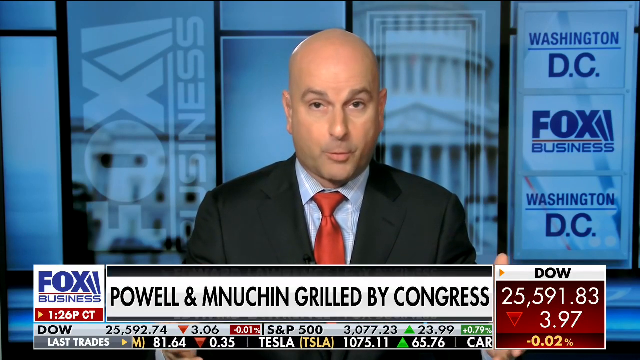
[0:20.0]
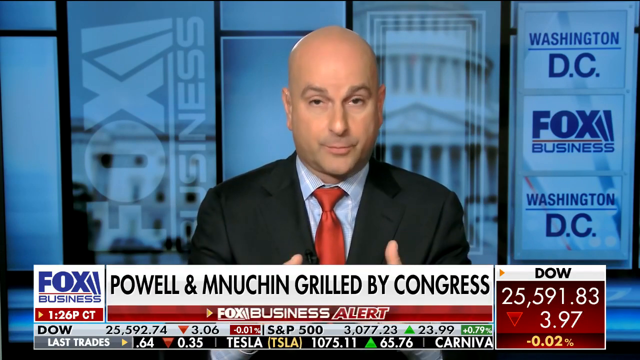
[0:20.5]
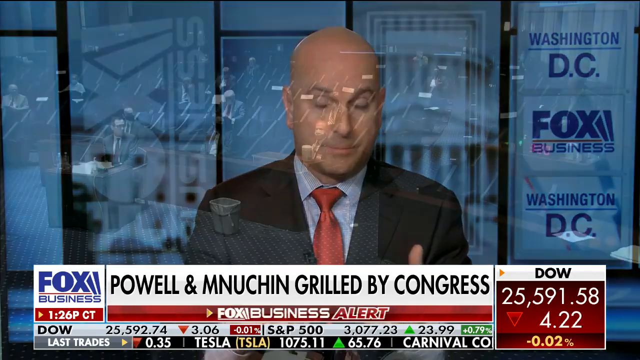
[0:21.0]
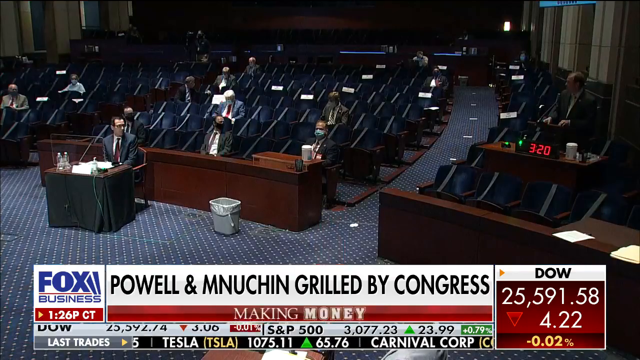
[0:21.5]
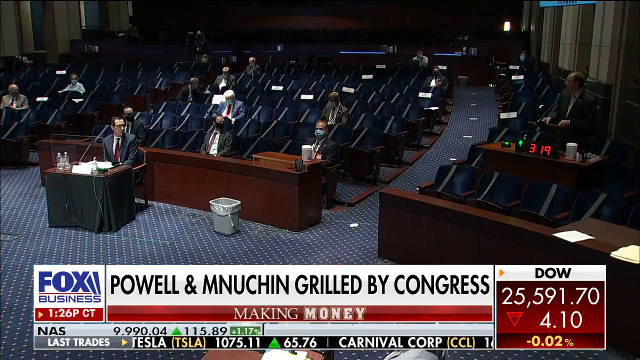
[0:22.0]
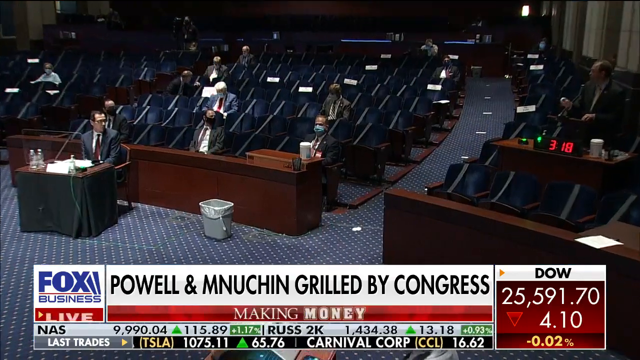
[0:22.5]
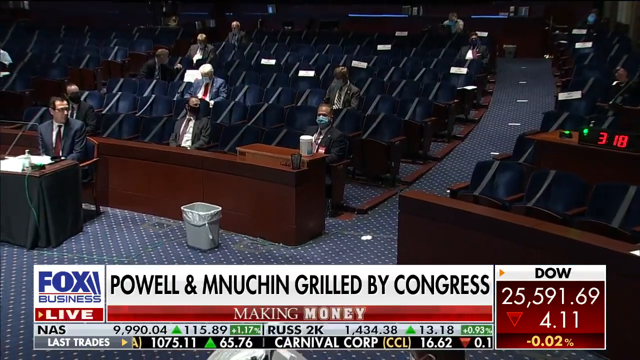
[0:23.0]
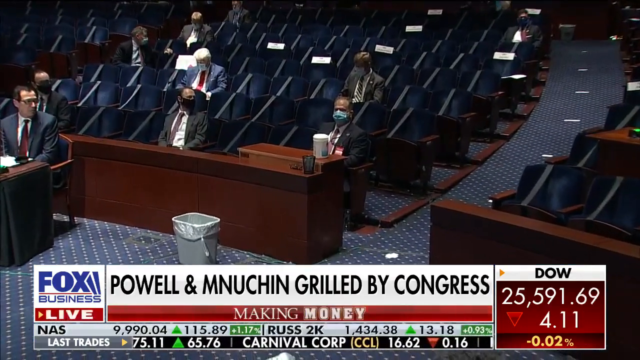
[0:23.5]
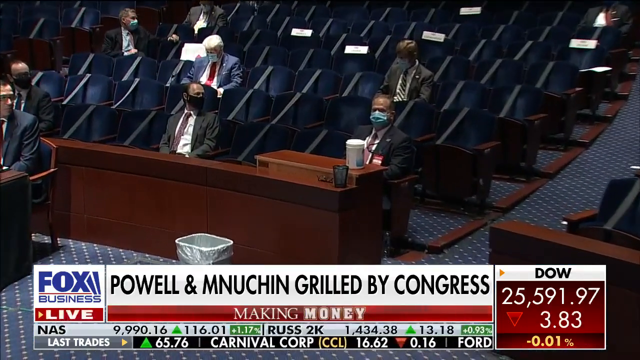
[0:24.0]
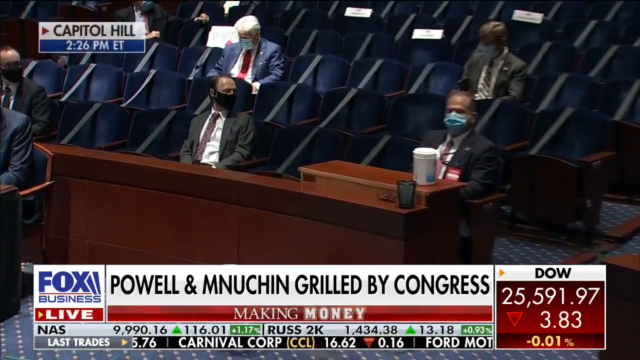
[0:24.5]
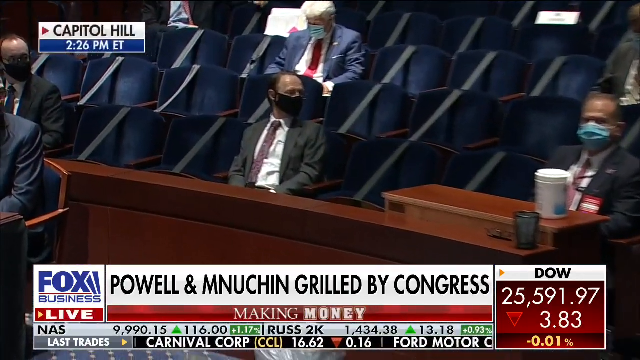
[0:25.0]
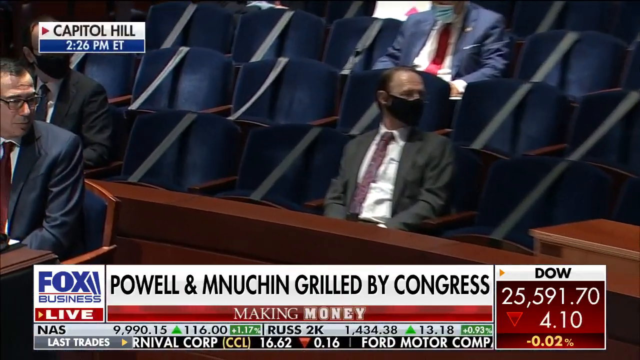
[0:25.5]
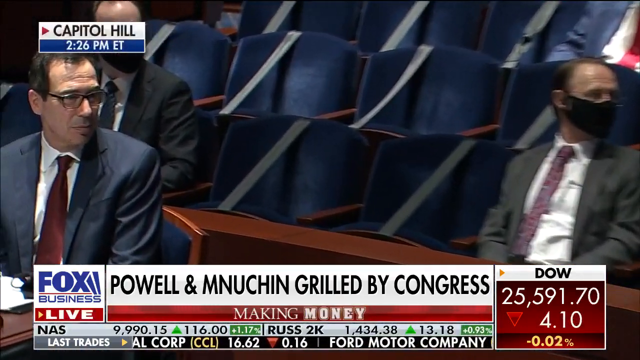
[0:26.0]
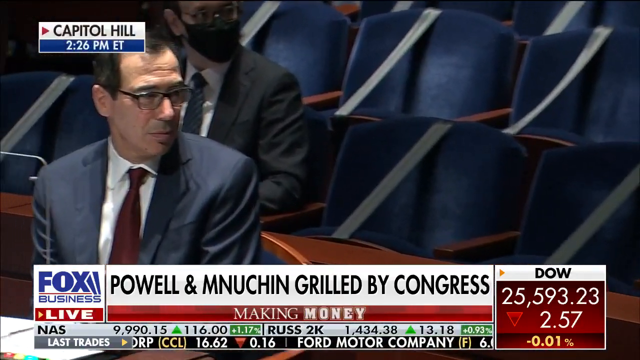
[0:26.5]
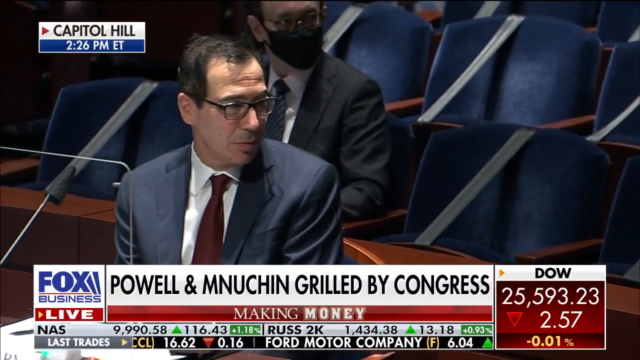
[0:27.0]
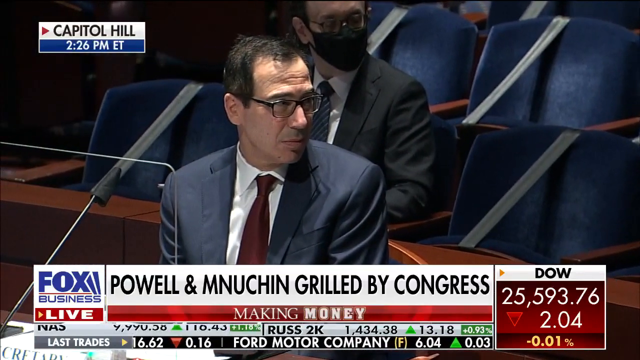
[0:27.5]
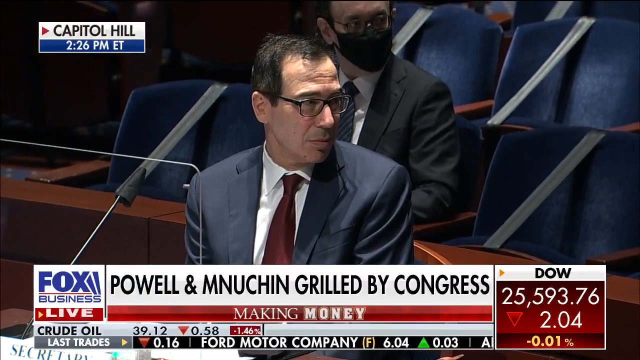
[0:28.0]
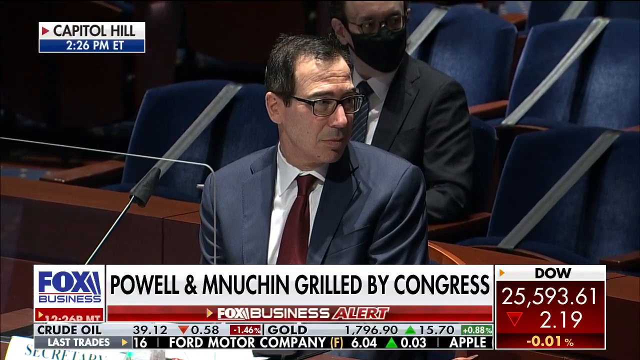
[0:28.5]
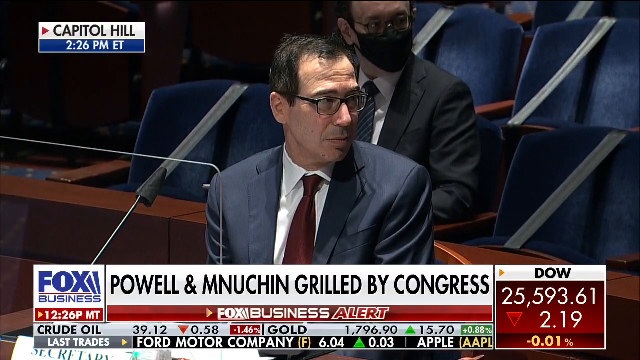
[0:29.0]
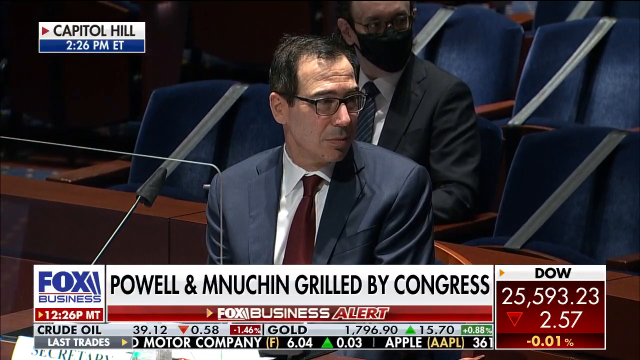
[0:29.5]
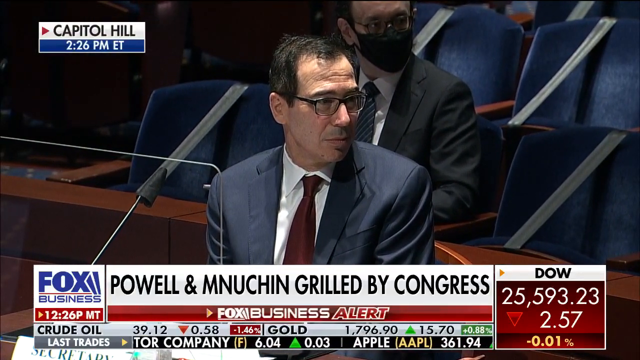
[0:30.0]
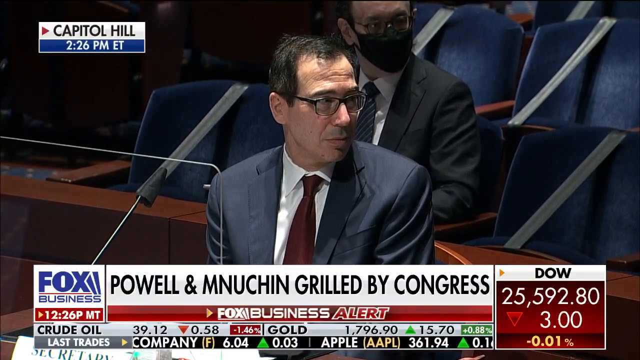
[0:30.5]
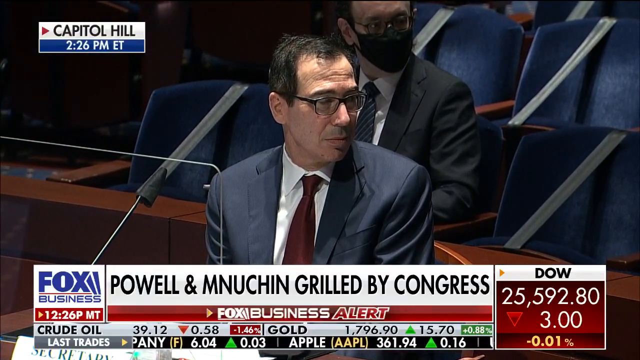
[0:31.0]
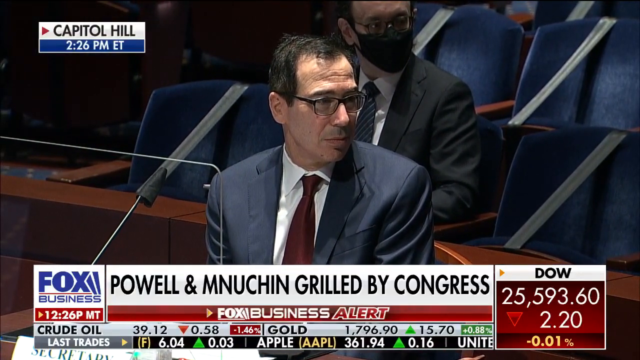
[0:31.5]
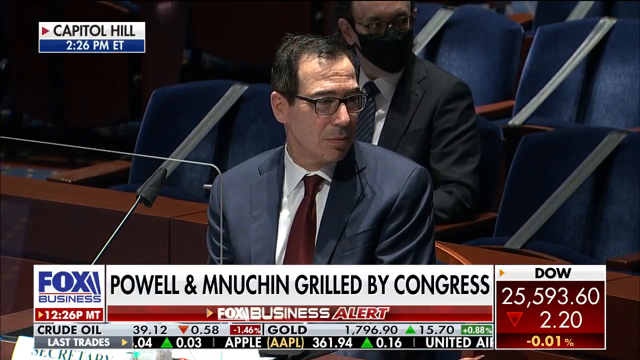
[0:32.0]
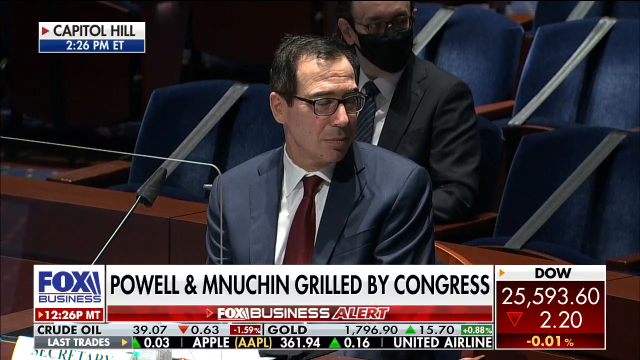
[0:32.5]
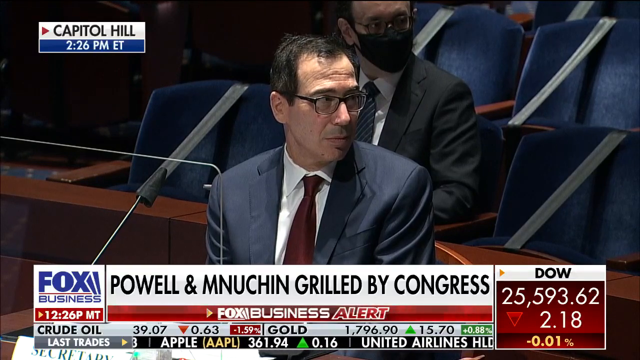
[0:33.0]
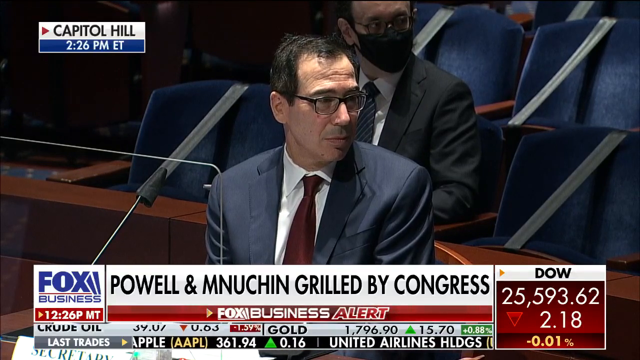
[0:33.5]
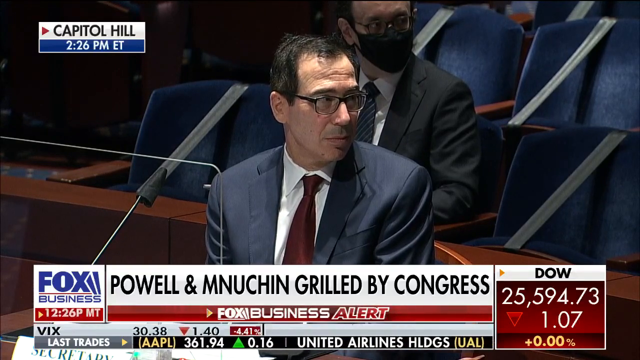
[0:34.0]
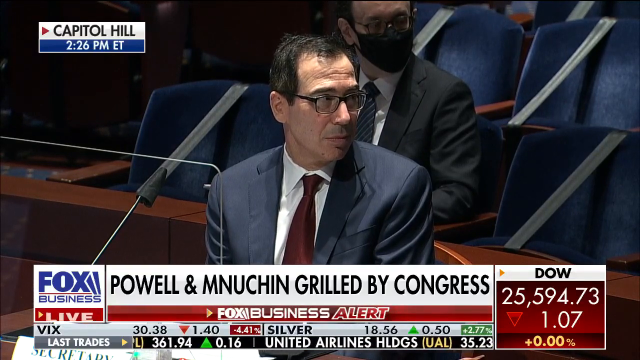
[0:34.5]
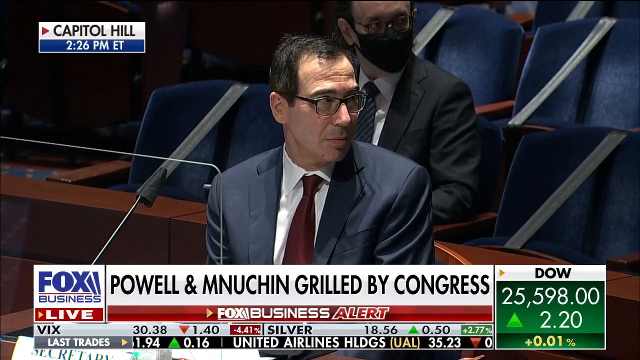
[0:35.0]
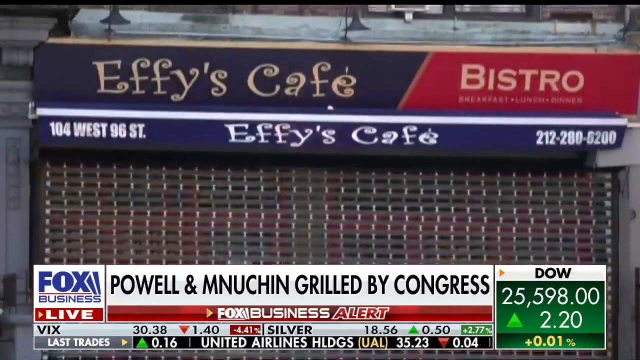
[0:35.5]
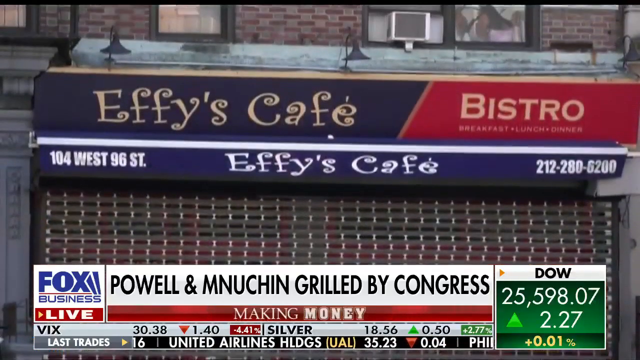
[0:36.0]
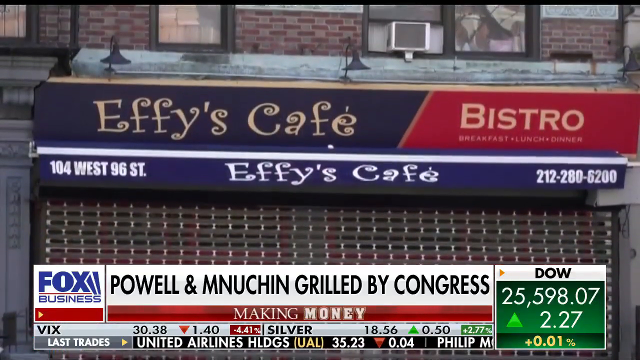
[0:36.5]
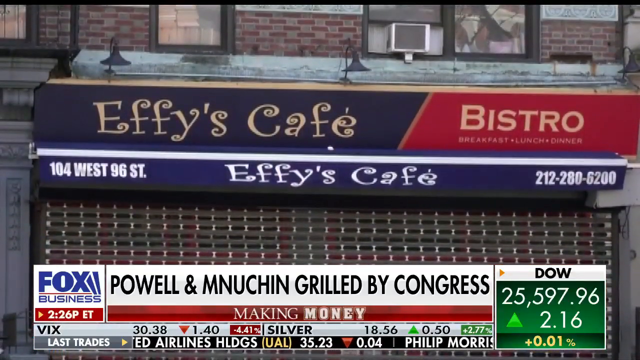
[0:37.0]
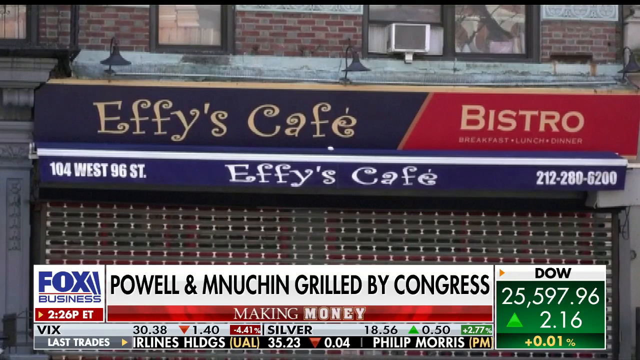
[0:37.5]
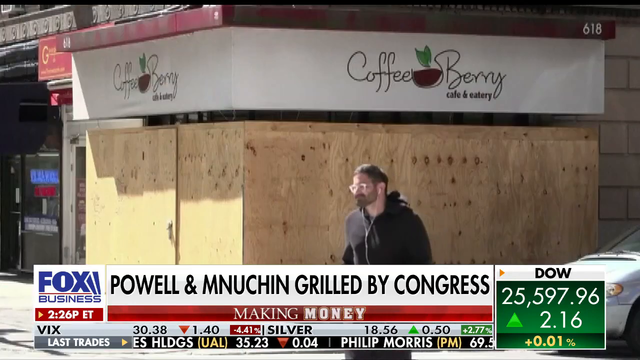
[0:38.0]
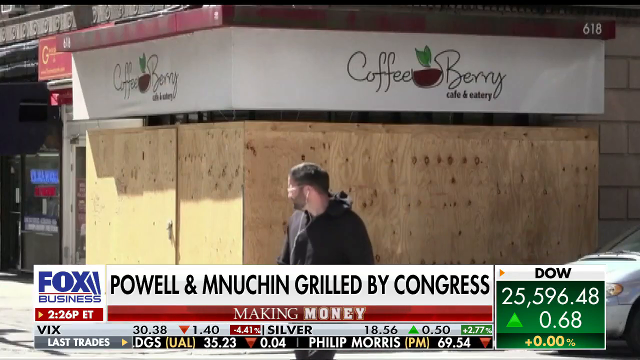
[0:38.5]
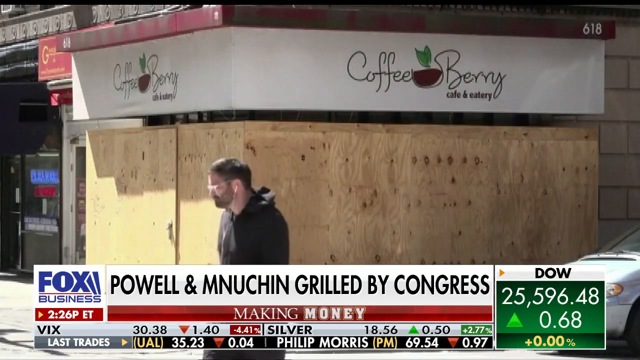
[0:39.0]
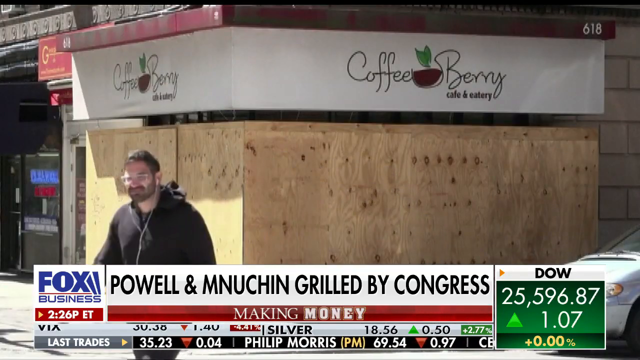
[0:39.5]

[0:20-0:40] The bald white reporter in a black suit, red tie and white shirt is on screen. The video transitions to footage of Congress and zooms in on a man in a blue suit, white shirt and red tie, wearing glasses, who is not performing any action. It then transitions to two images of two different coffee shops, apparently Effie's Cafe Bistro and Coffee Berry. Everyone in Congress is well dressed, as are the reporters, in suits, ties and shirts.